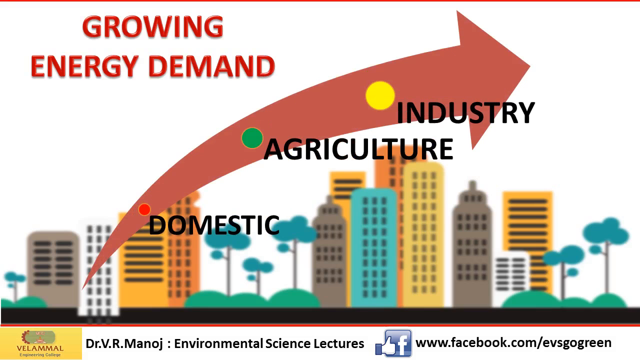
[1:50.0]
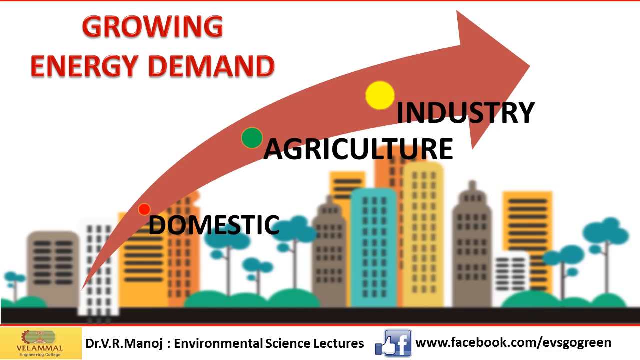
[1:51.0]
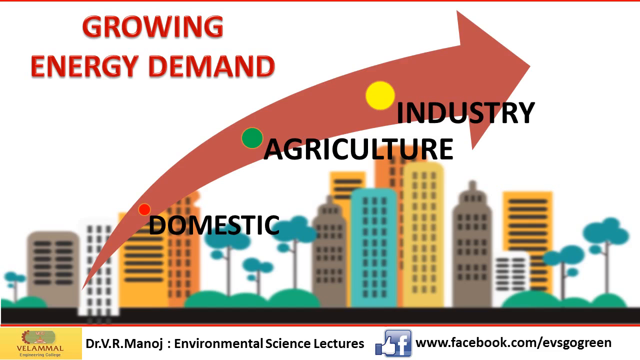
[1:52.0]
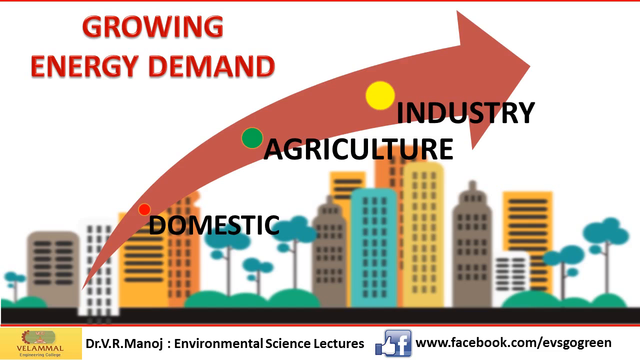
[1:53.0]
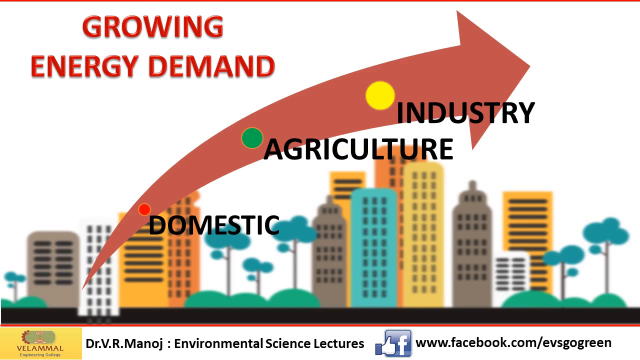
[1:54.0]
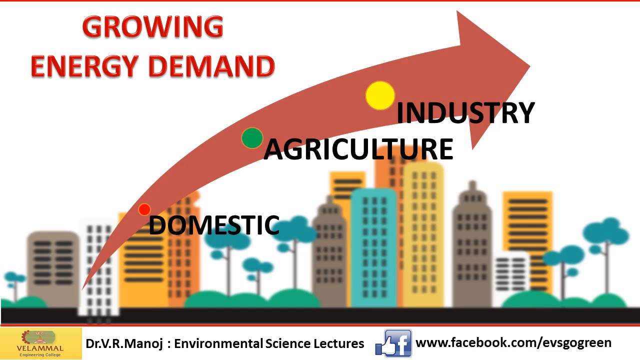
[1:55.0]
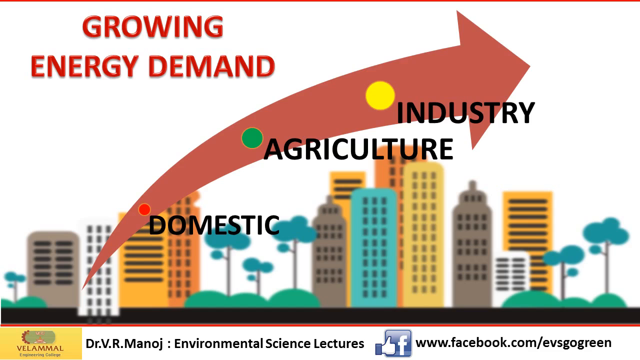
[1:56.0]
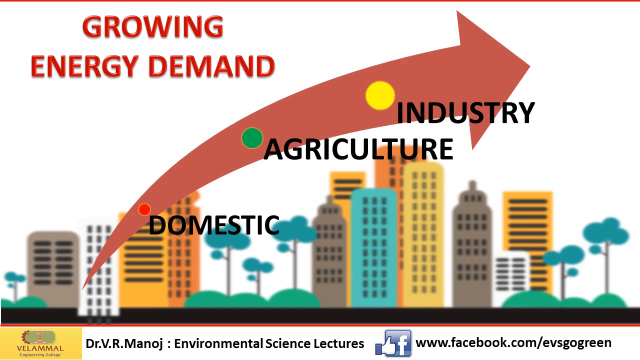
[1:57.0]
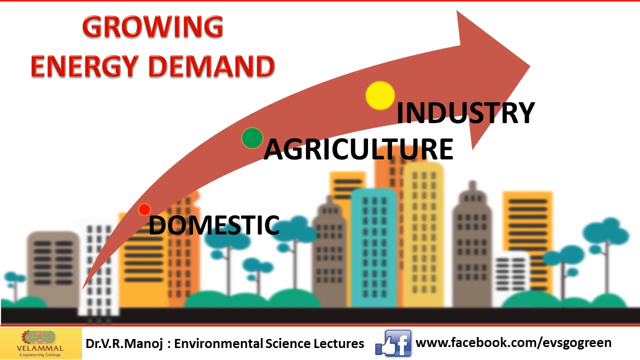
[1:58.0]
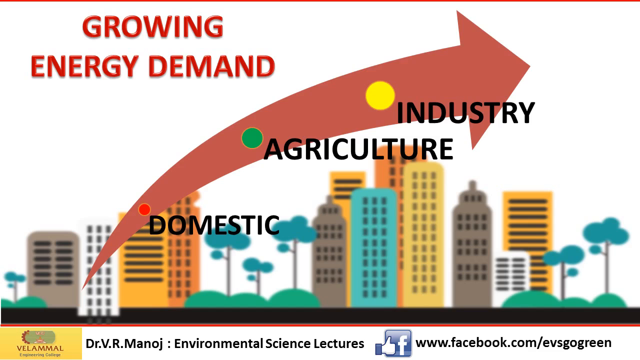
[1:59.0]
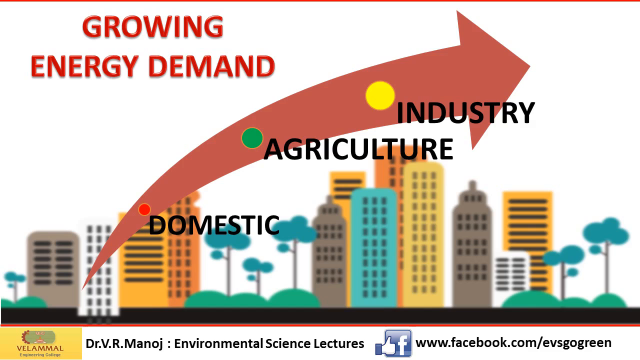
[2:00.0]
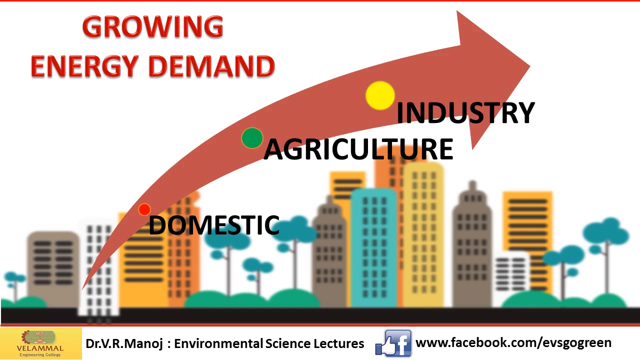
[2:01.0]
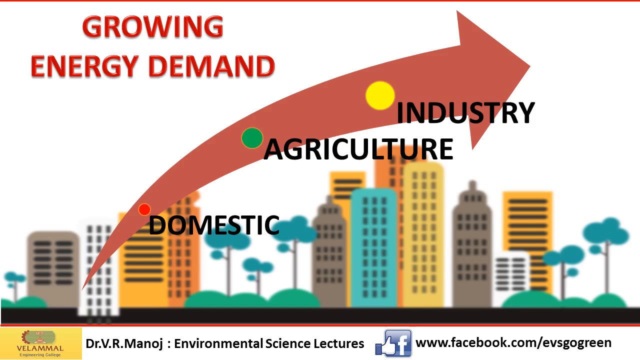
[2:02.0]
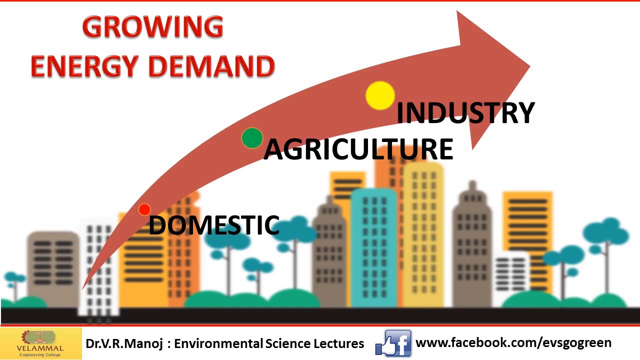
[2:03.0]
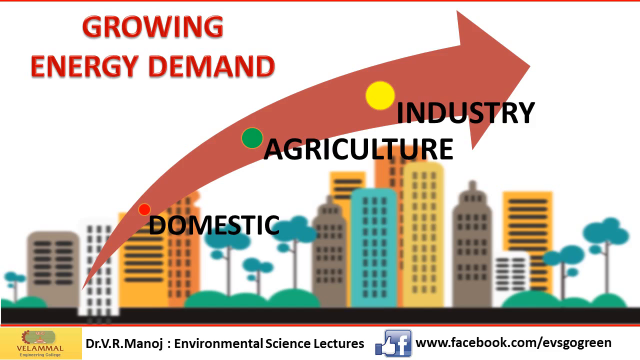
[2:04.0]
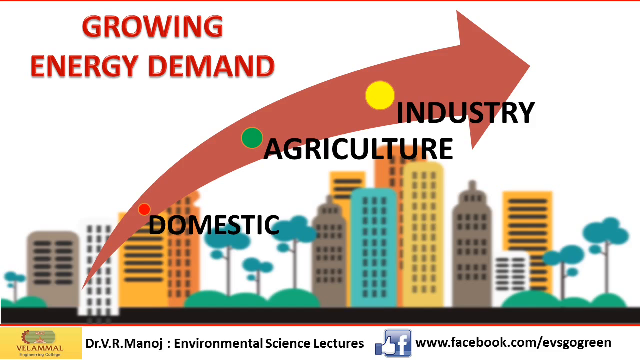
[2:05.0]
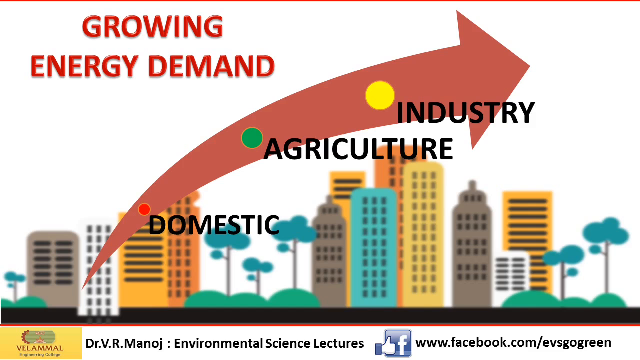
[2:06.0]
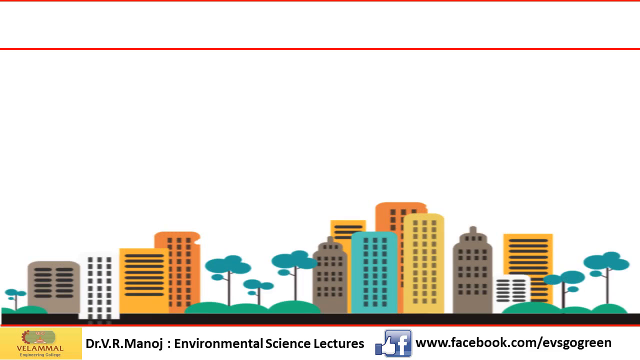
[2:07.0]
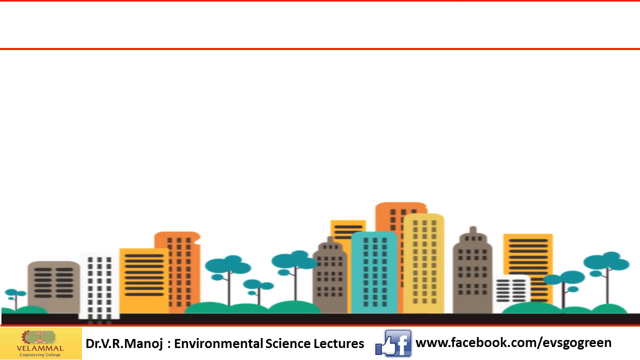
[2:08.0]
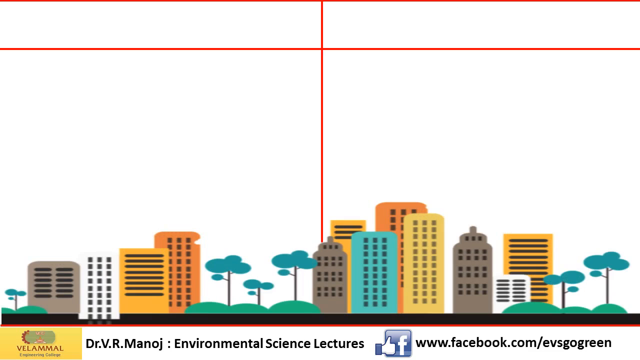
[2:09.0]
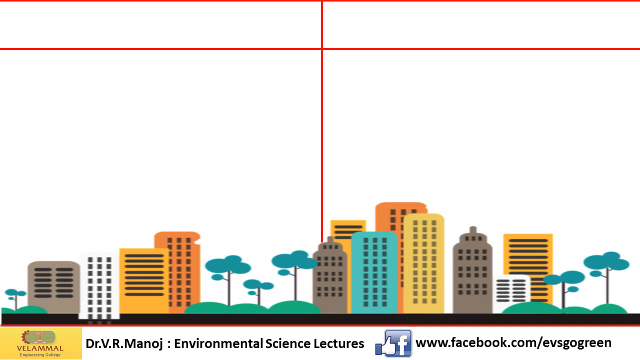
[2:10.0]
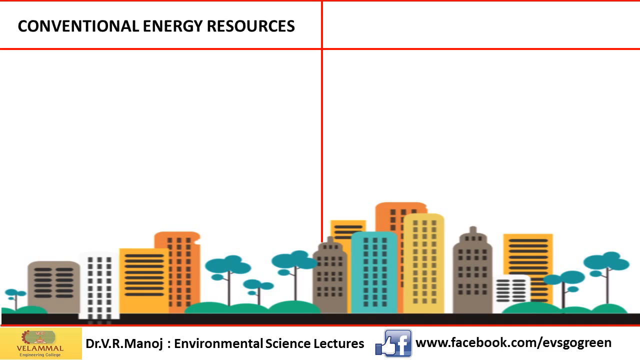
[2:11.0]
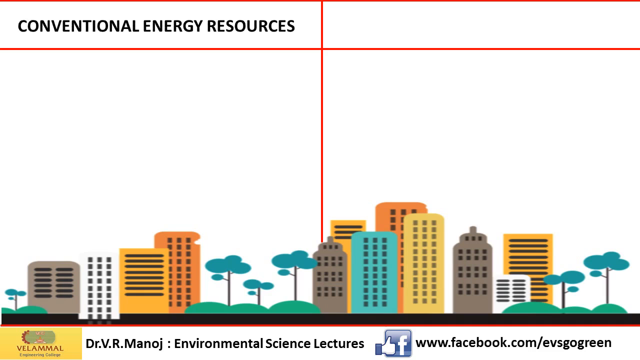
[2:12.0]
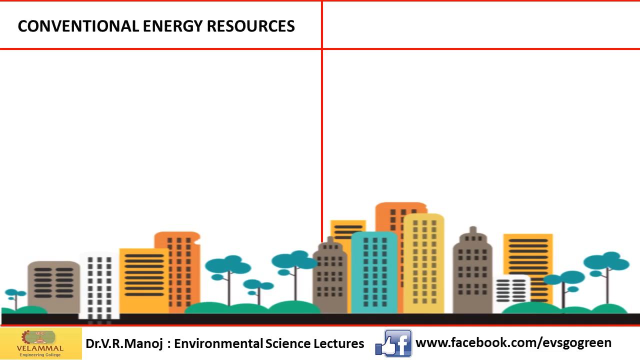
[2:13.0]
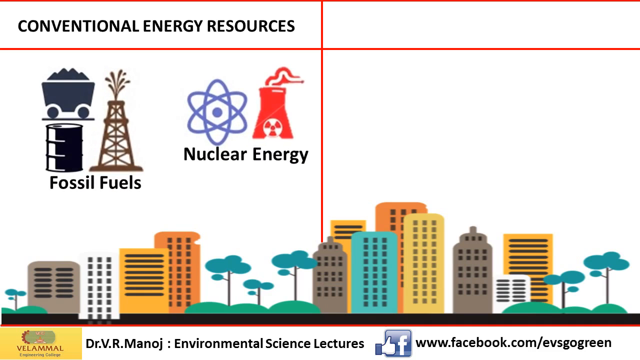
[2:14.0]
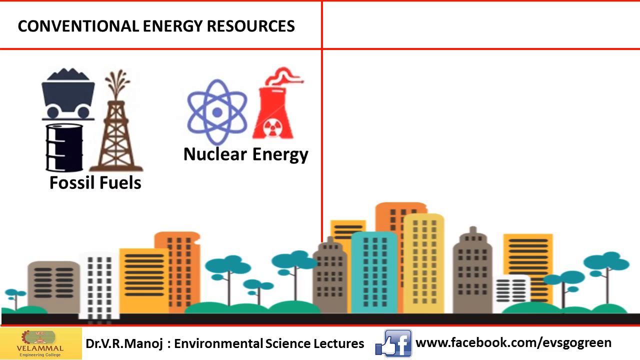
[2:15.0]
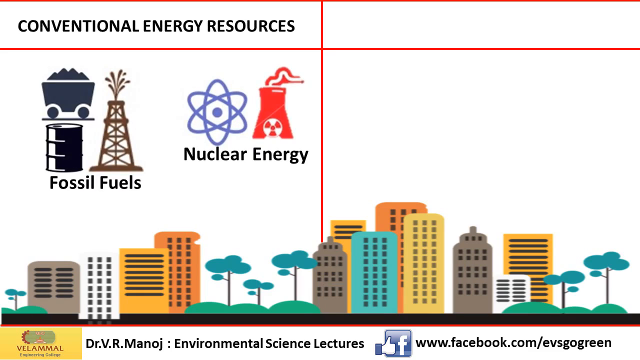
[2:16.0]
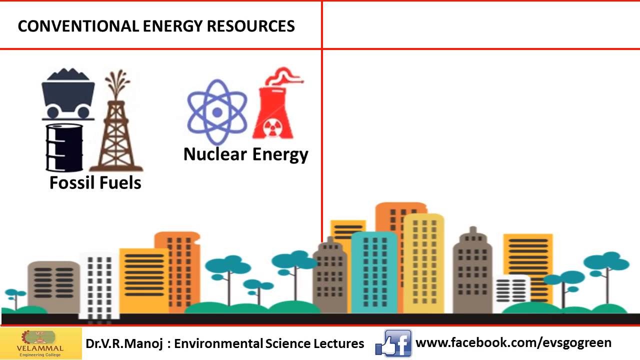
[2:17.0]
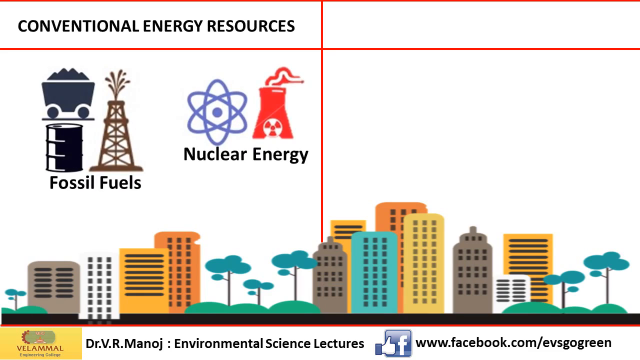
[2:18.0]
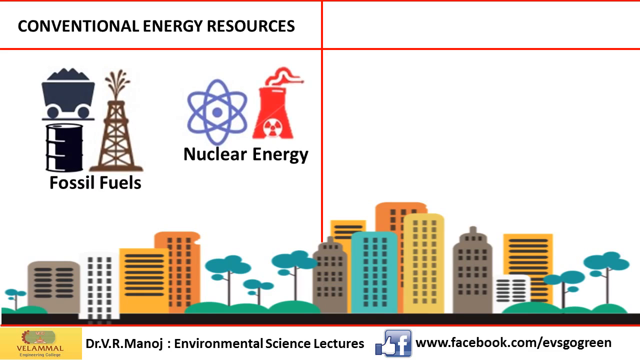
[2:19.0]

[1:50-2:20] On a white background is a color illustration of a city skyscraper scene, with high-rise buildings drawn simply in browns, whites, oranges, yellows and greens, and a few scattered trees. In the upper left corner, bold red text reads "growing energy demand". A diagonal red arrow rises from the bottom left, with the word "domestic" and a red dot, above that "agriculture" with a green dot, and at the top "industry" with a yellow dot. At the bottom of the screen are the university, Balammal Engineering College, with its logo, and the class name "environmental science lectures" in bold black text. Then "conventional energy resources" pops up in the upper left corner with images representing fossil fuels (coal, oil and gas), and nuclear energy appears in the upper right corner.